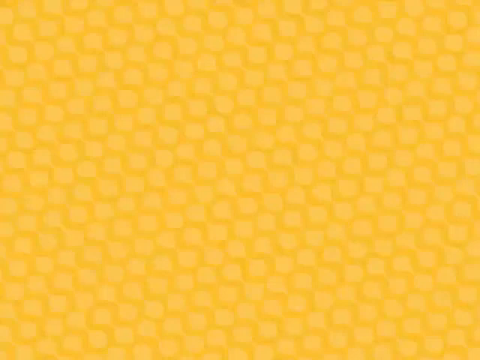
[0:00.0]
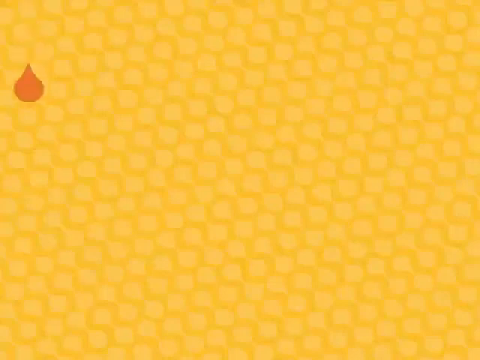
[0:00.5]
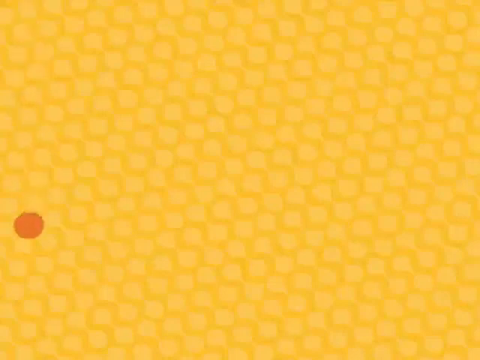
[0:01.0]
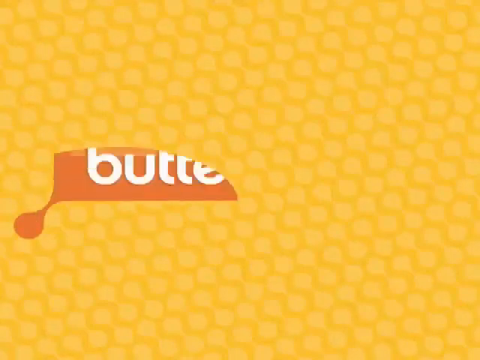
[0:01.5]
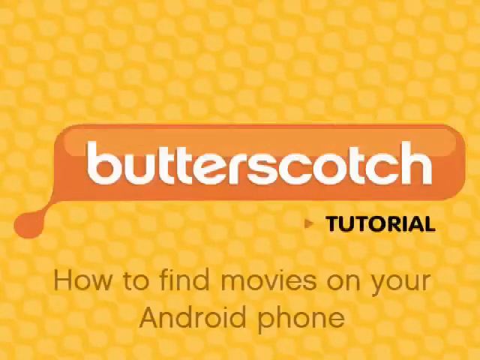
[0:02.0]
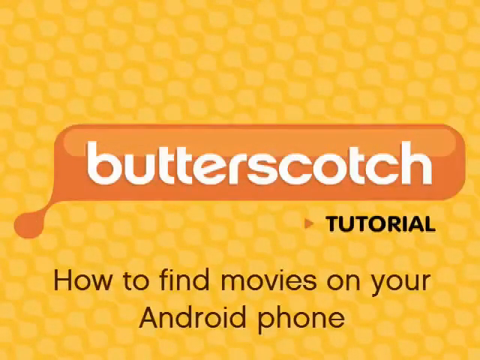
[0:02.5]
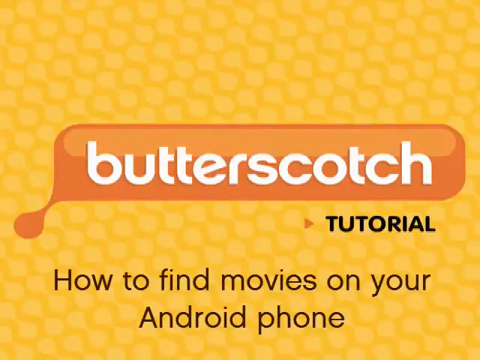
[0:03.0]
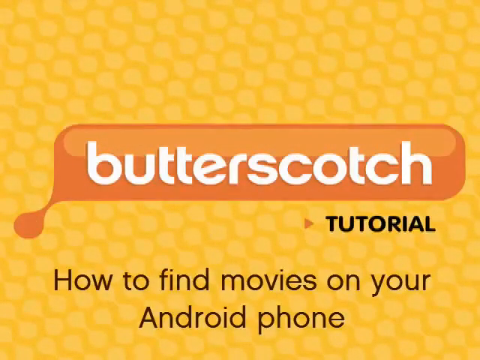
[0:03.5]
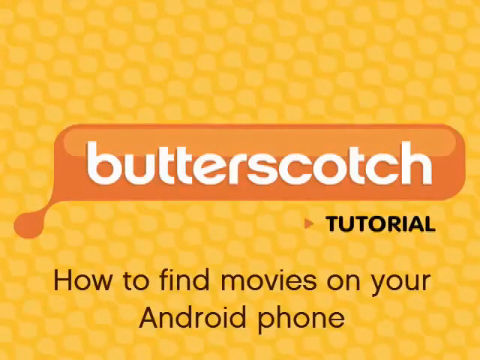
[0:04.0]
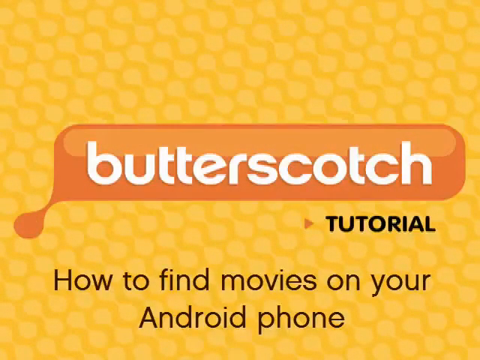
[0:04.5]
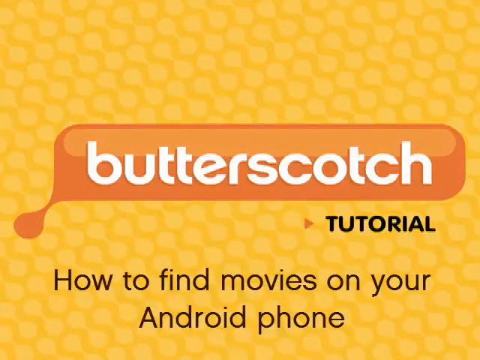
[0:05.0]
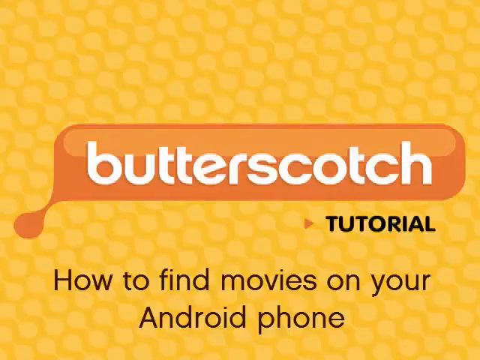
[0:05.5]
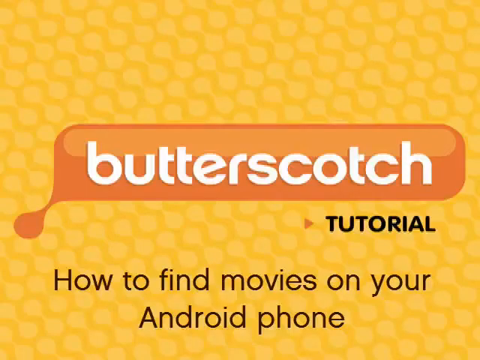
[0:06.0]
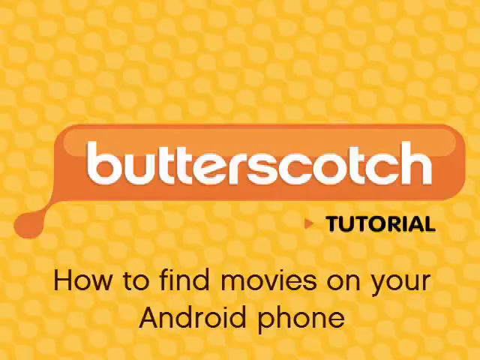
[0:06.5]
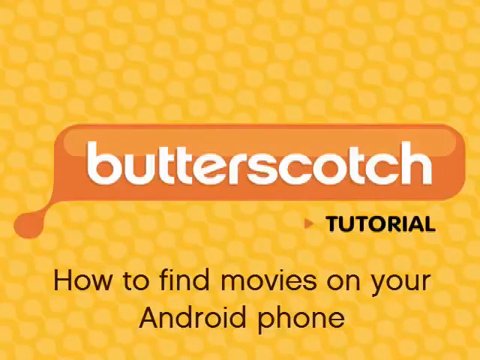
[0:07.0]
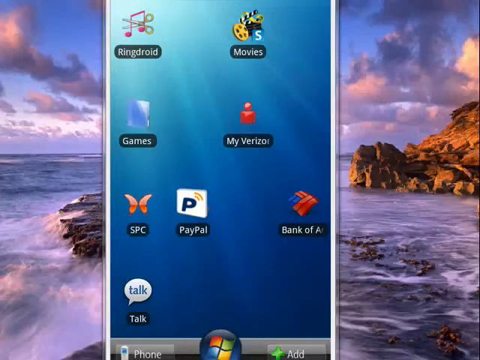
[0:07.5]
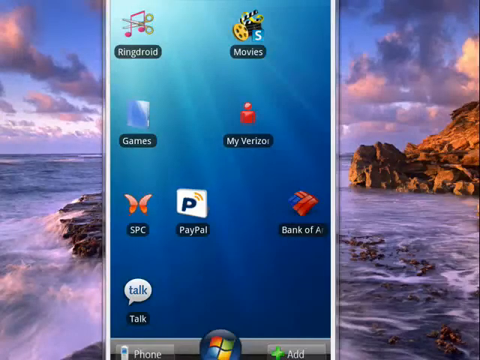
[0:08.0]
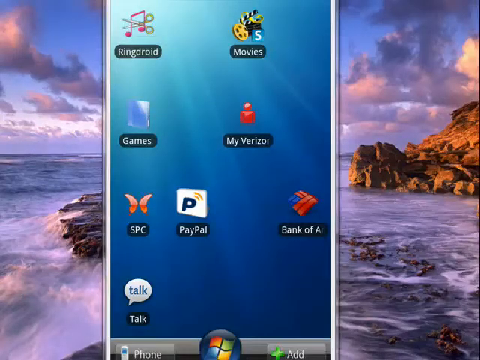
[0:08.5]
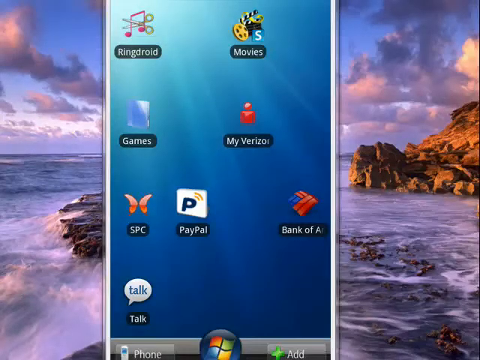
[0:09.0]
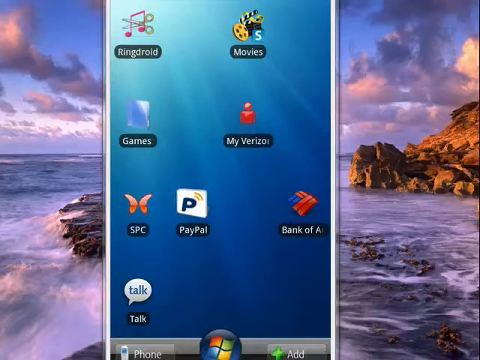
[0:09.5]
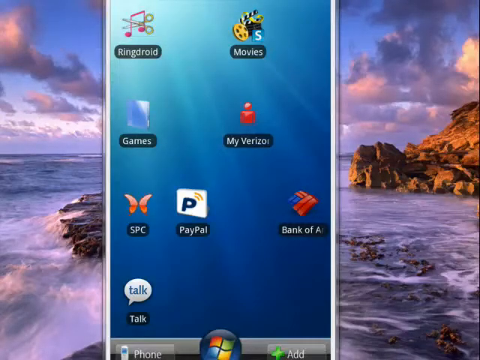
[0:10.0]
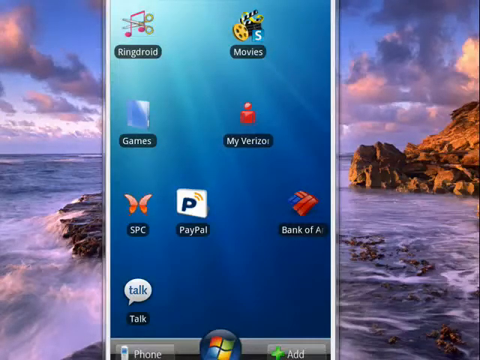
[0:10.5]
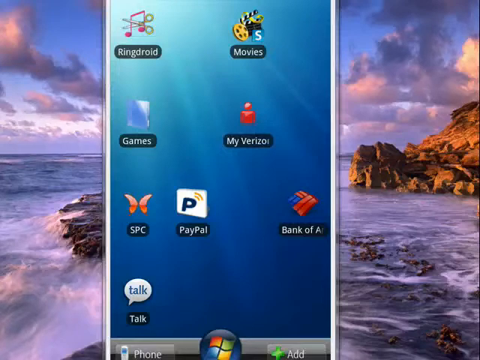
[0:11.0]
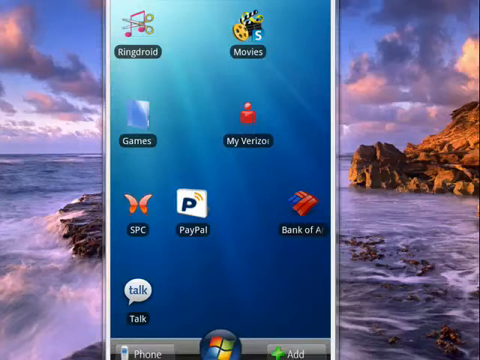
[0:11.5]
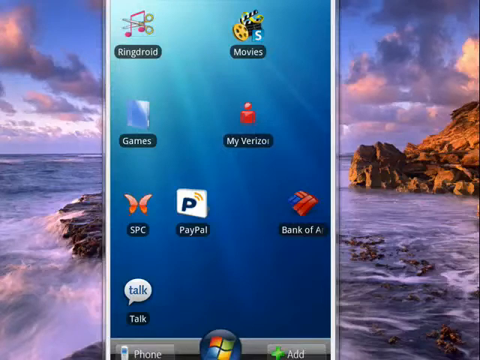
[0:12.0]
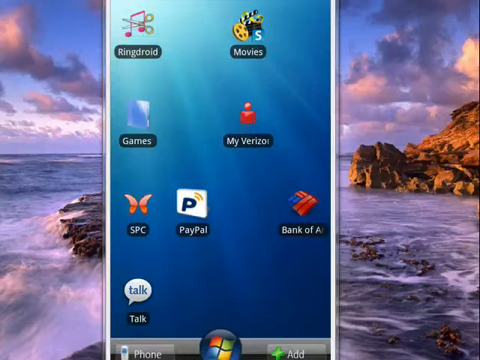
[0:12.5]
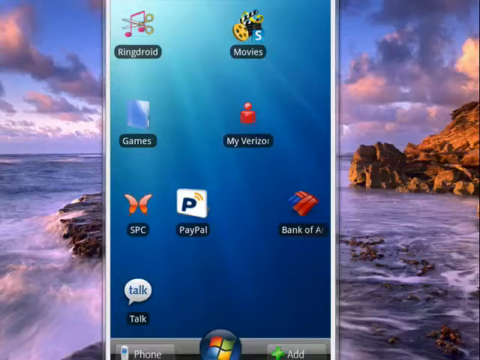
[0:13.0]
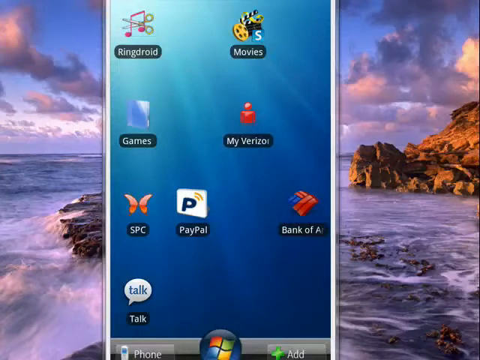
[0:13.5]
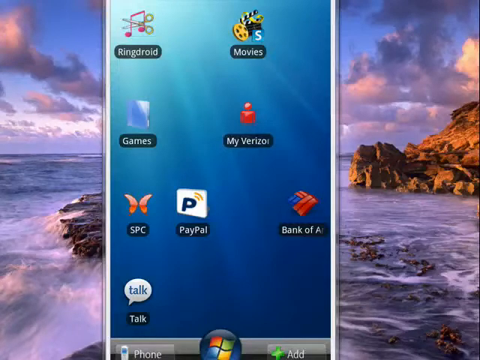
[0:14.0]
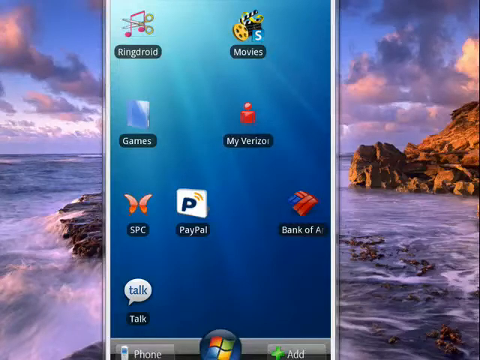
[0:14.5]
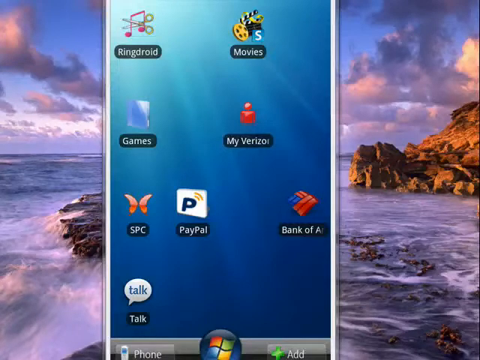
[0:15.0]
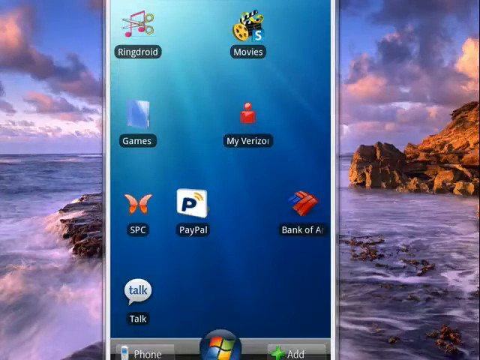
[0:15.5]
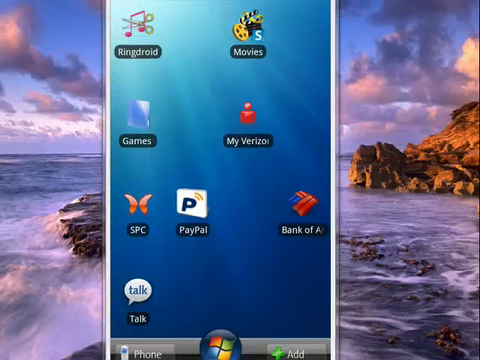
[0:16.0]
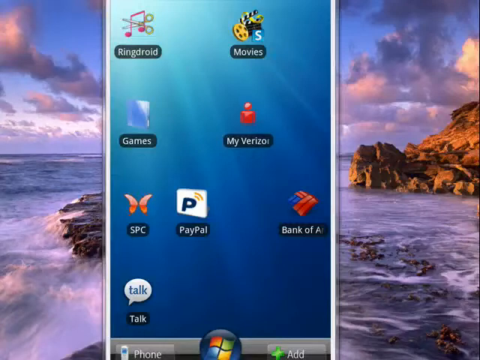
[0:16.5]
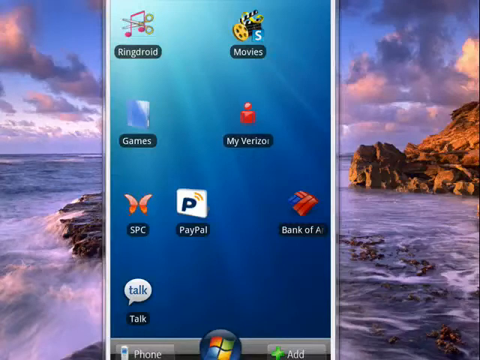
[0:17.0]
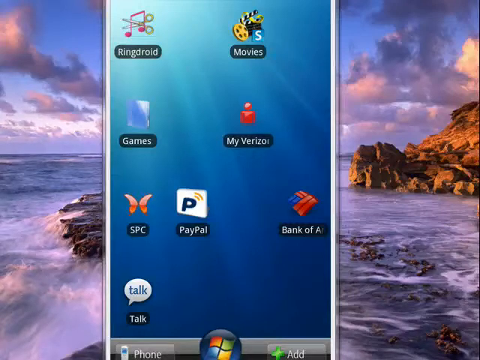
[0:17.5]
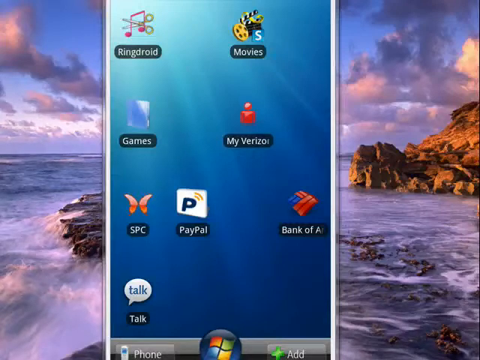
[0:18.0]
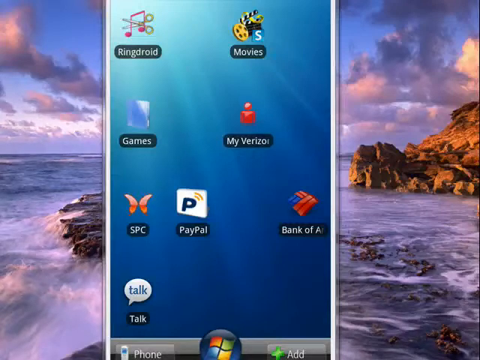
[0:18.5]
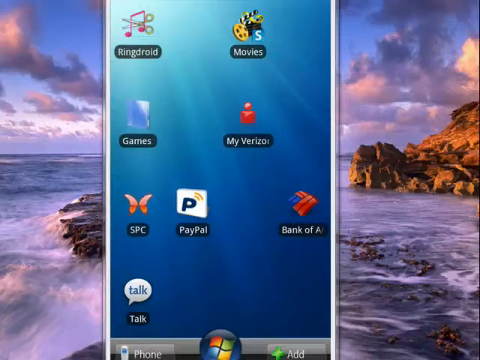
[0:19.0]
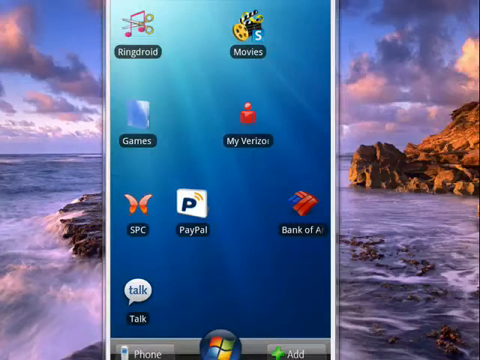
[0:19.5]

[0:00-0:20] A dark yellow background with light yellow spots all over it opens the video. An orange spot appears in the bottom left-hand corner and moves into a large shape, a long rectangle, with "butterscotch" inside it in white text. Underneath, on the yellow background, "tutorial" appears in black text, and below that, in thinner text, "how to find movies on your Android phone." An image of an Android phone then appears against a background of an ocean with some rocks in it and a sky. The phone has various apps on it, such as PayPal, Bank of America, games, movies and talk, and a blue background at the bottom. A Windows logo is in the middle. In the top right is the movies icon, with a logo above it.